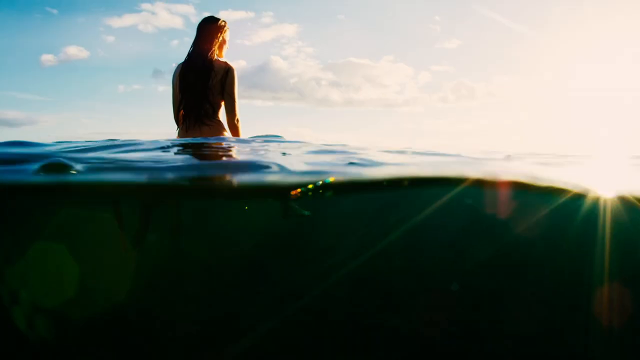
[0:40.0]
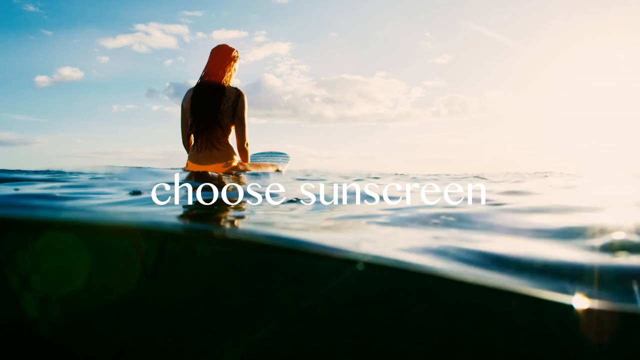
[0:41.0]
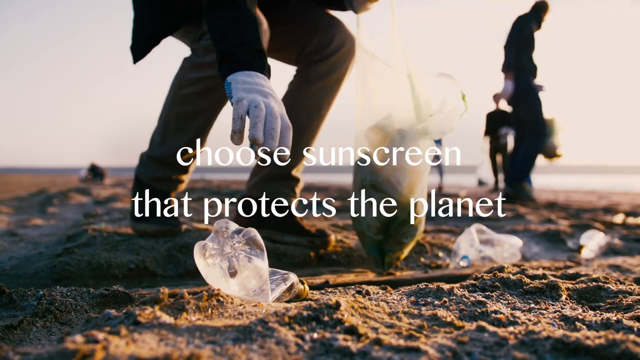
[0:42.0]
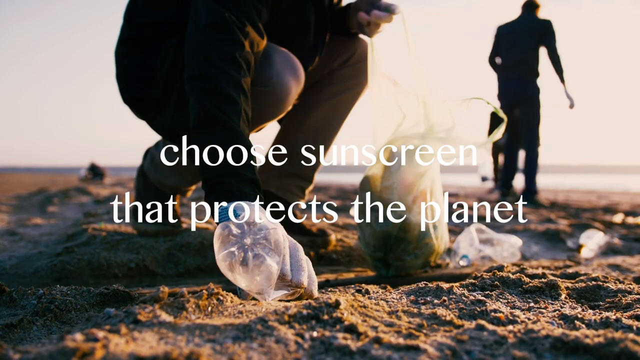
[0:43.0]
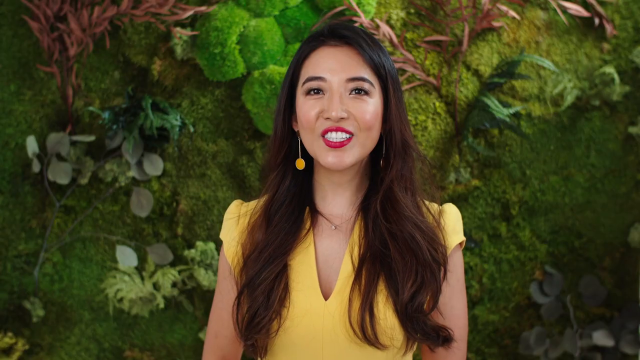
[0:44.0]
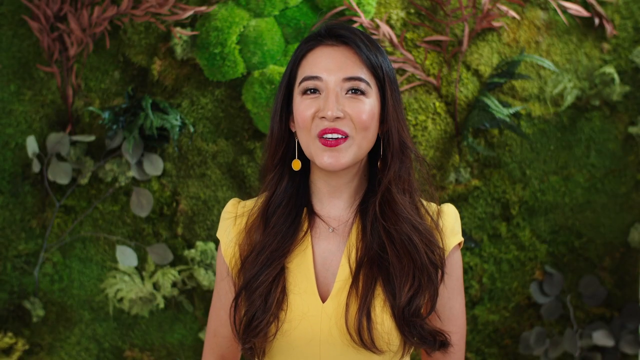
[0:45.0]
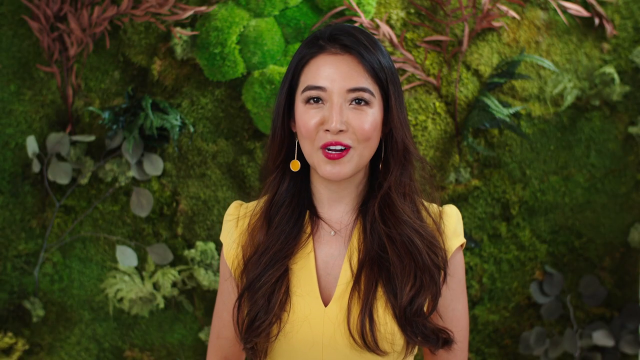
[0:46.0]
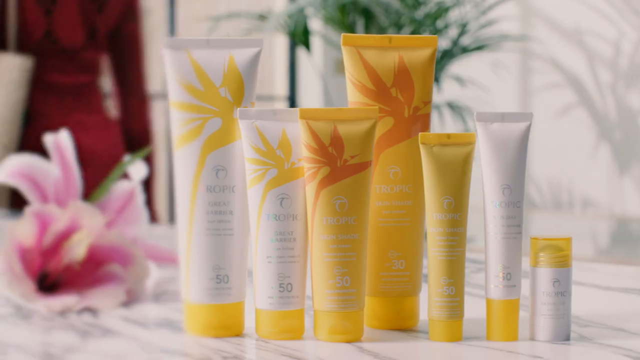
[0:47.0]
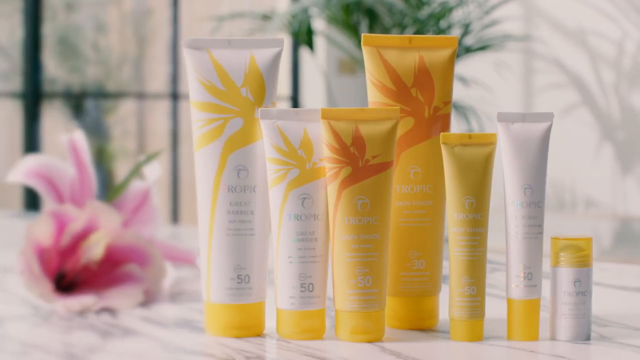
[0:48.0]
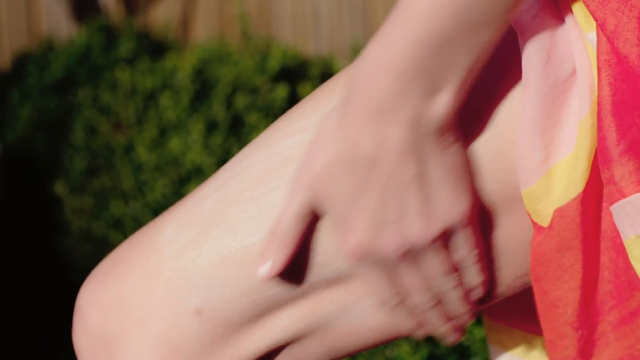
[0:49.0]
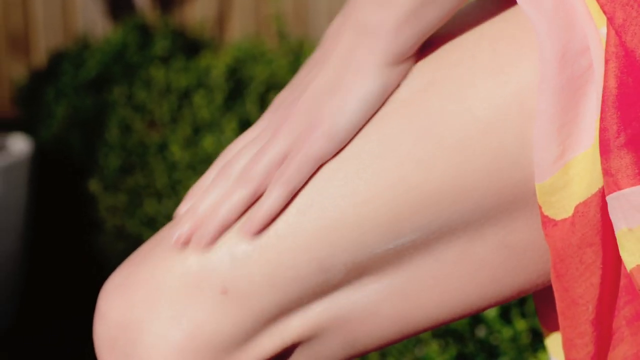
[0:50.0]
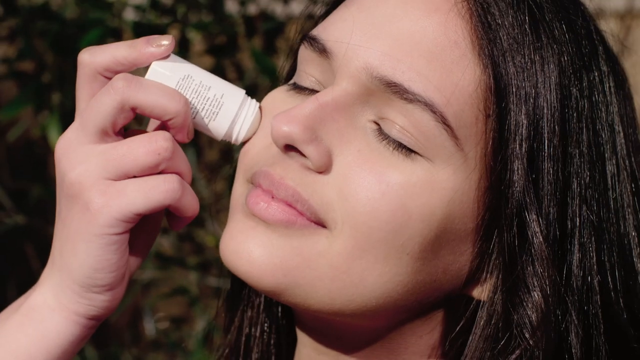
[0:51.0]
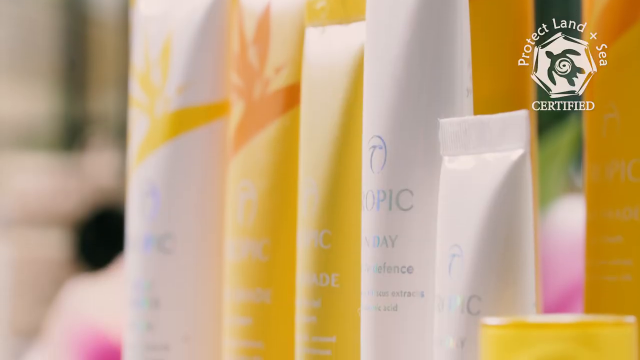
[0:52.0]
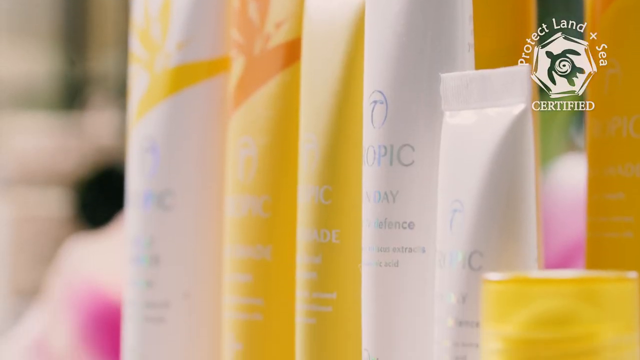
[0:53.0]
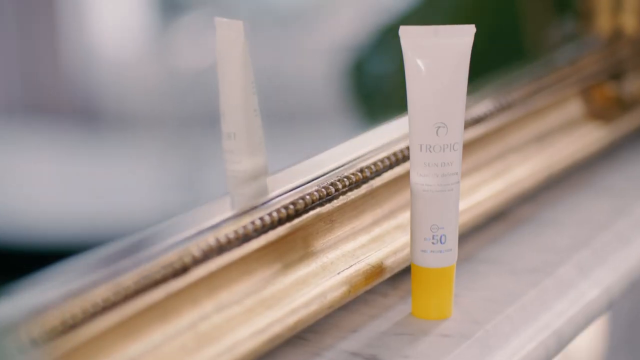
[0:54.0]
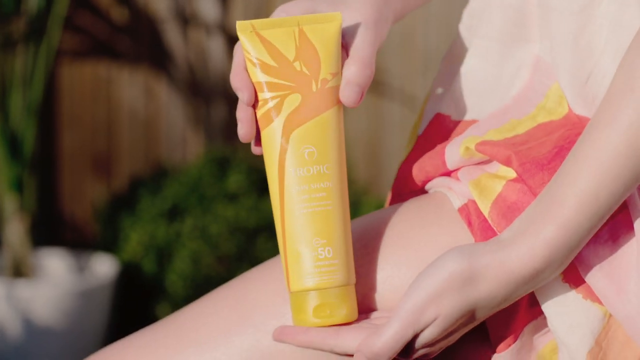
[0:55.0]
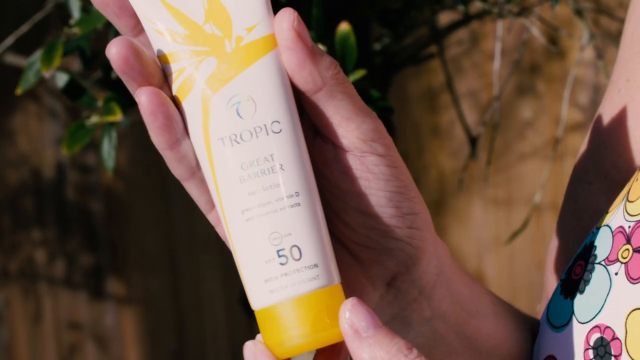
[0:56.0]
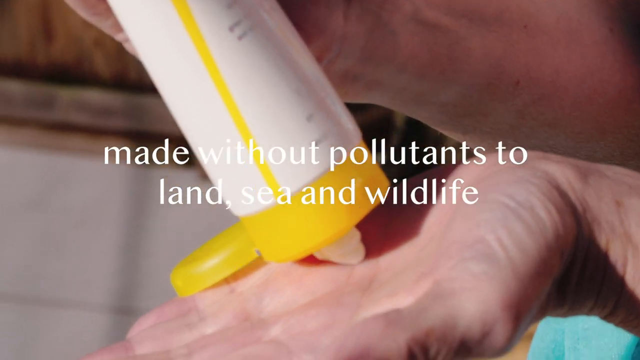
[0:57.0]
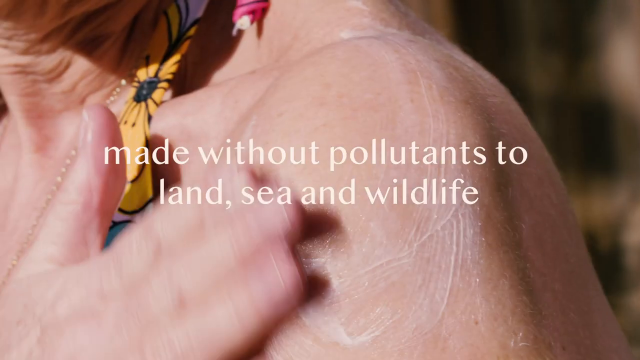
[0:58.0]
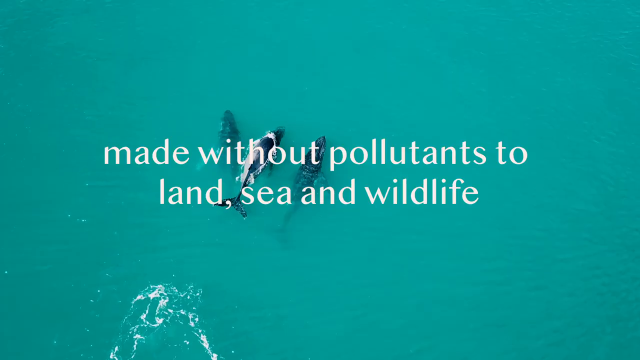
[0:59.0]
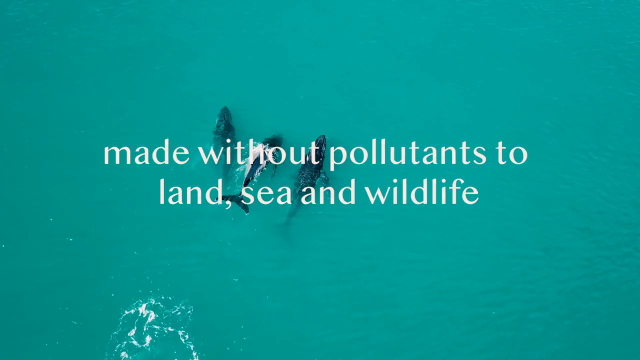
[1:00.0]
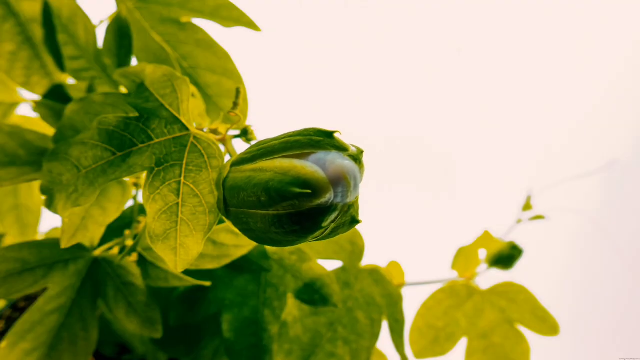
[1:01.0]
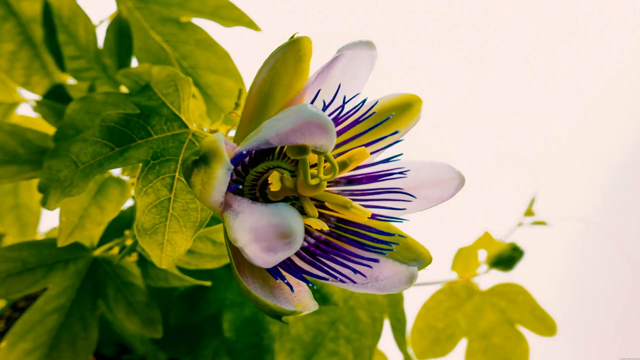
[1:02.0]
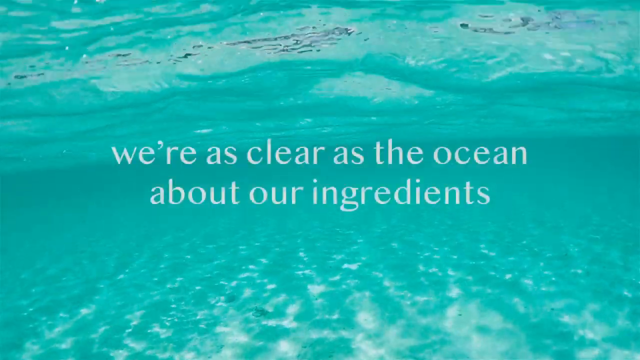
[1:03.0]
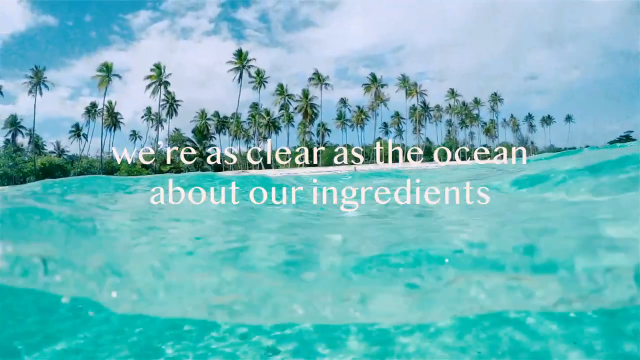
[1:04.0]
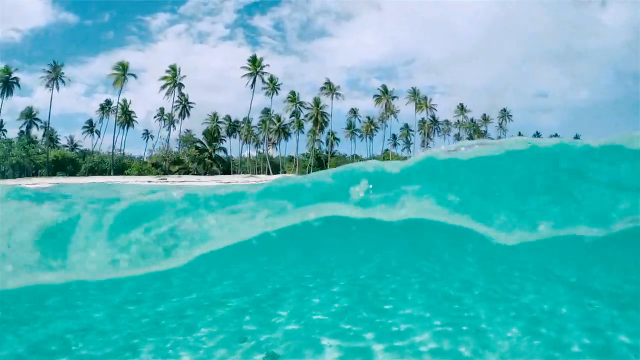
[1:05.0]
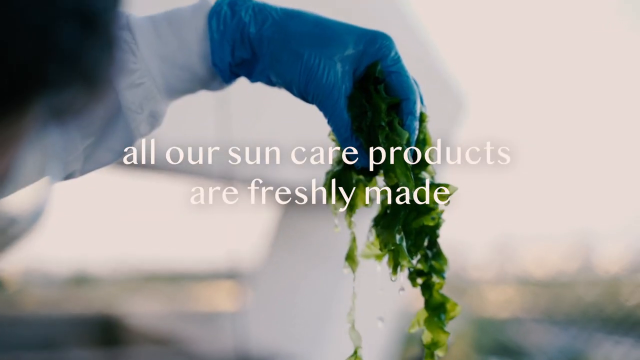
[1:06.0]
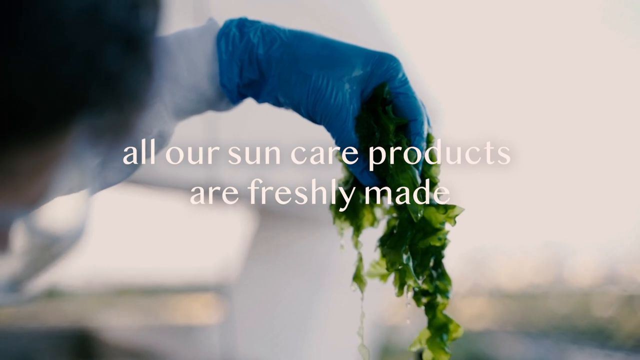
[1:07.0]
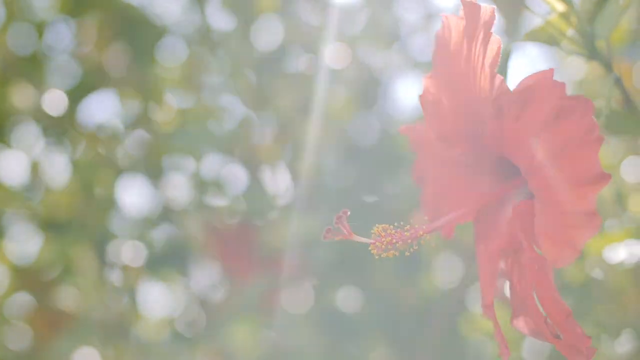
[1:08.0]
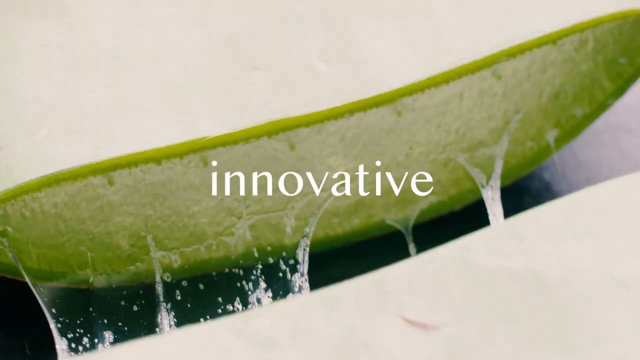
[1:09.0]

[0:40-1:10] A close-up shot has the camera halfway submerged in water. A person is standing out in the ocean, which appears to have a darker green tint, with their back facing the camera and their face facing forward. Clouds are in the sky and some sun is in the top right corner, and waves are splashing. As the camera pans up, text appears in the center of the screen that says "choose sunscreen." As the waves wash away and the water level goes down, the bottom of the person's bikini appears out of the water; the bikini is orange. The scene cuts to a sandy beach where people are picking up plastic and garbage. The person closest to the camera, wearing protective white gloves, reaches down with their right hand and picks up a plastic bottle. The screen then cuts to Susan Ma, once again speaking in front of the tree.